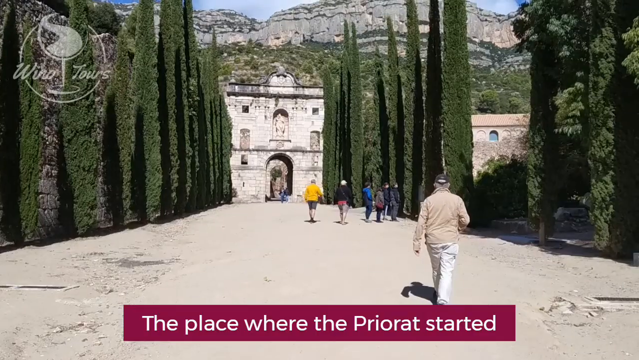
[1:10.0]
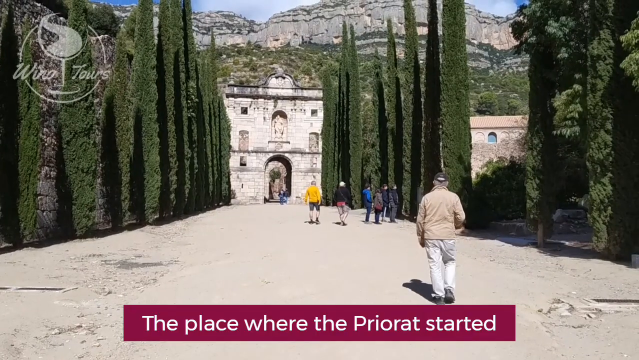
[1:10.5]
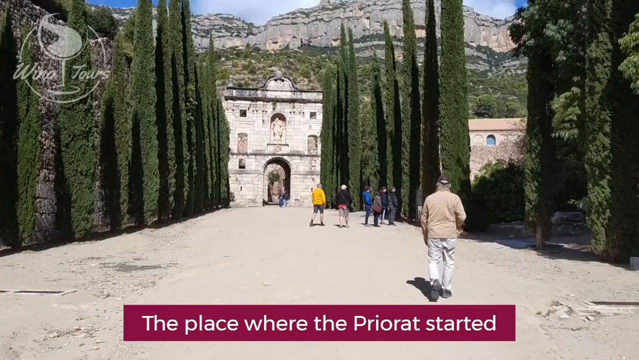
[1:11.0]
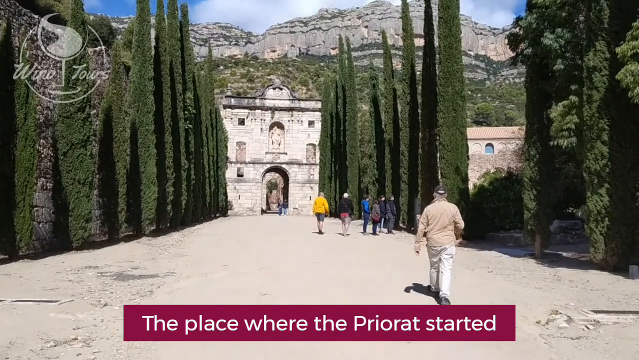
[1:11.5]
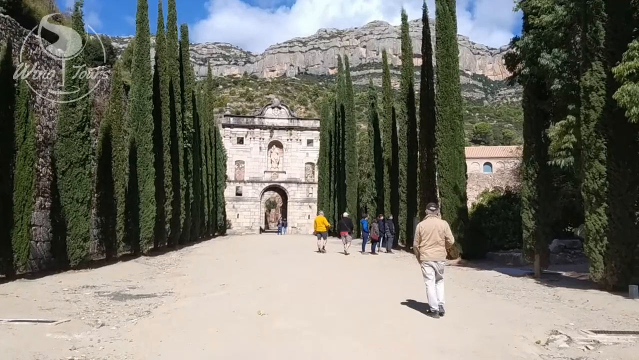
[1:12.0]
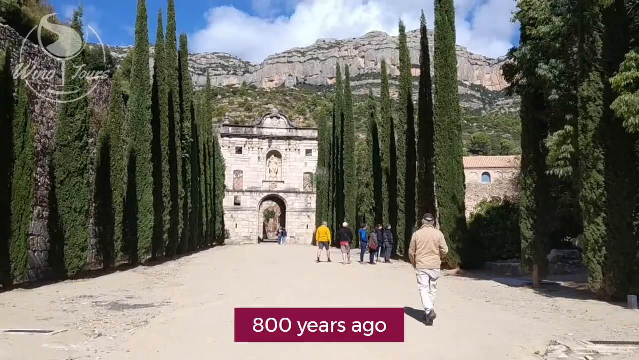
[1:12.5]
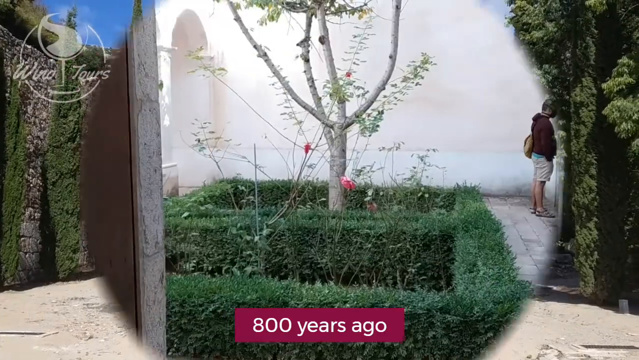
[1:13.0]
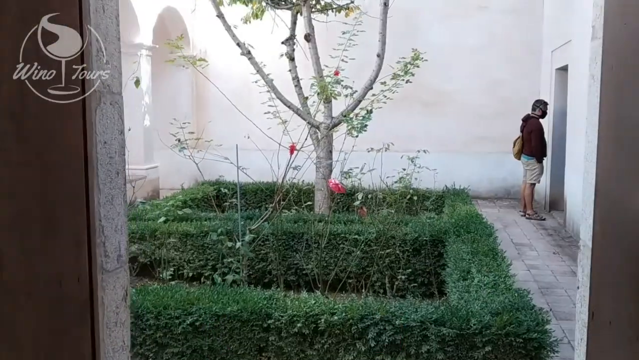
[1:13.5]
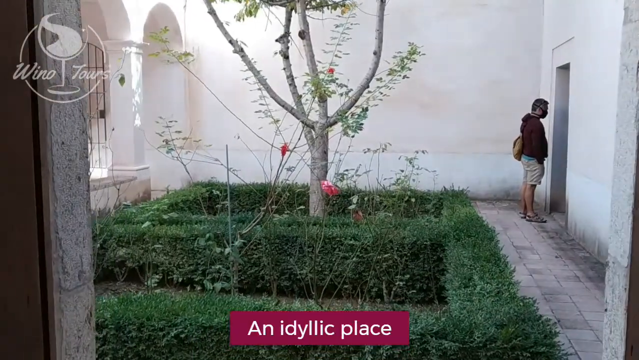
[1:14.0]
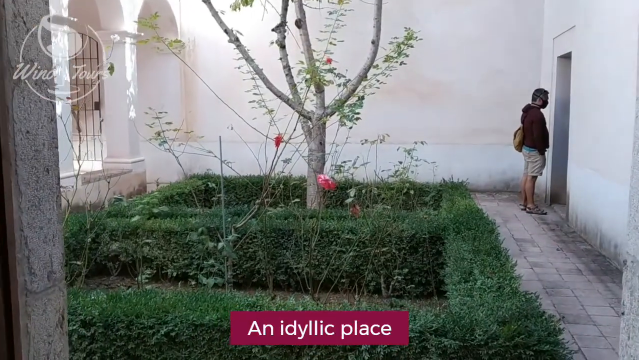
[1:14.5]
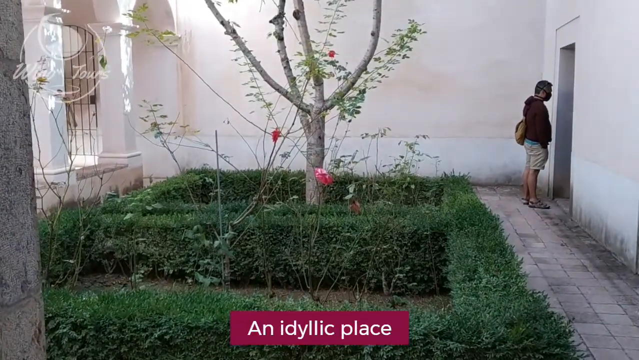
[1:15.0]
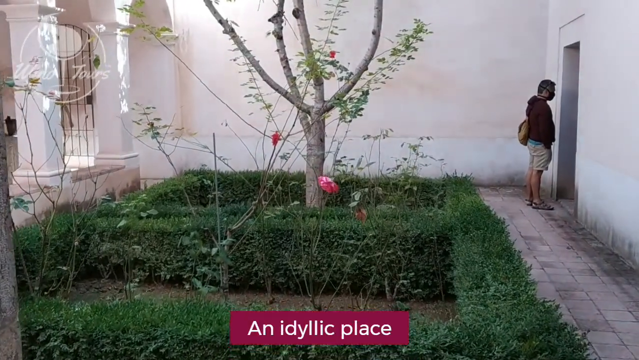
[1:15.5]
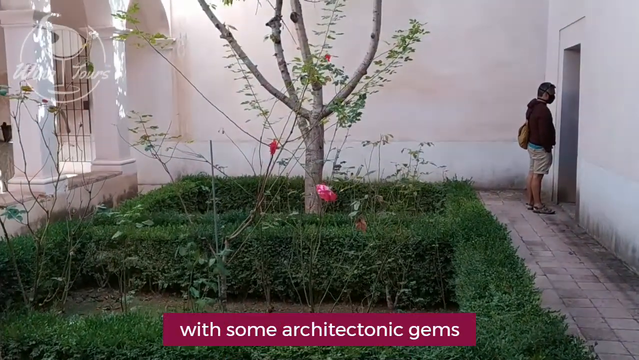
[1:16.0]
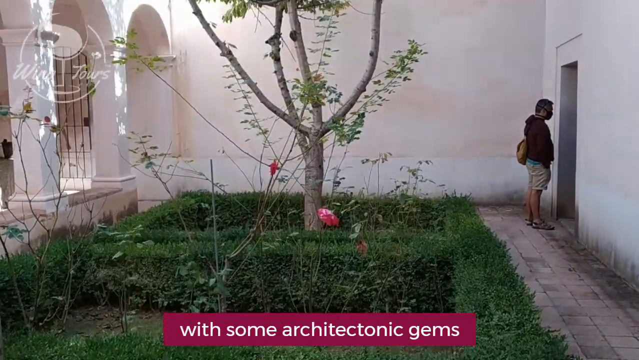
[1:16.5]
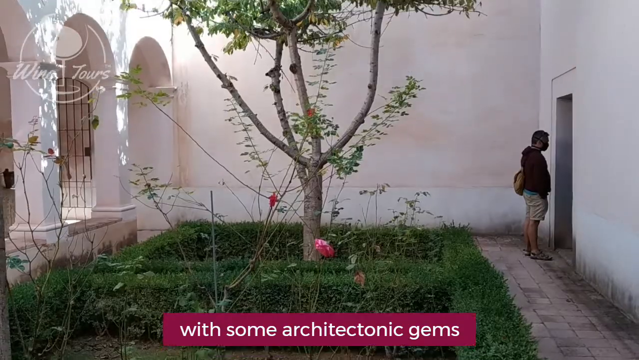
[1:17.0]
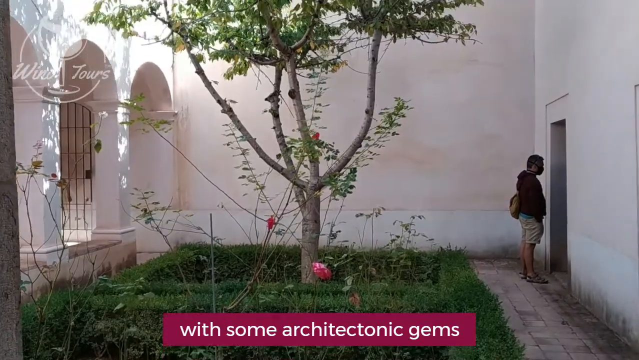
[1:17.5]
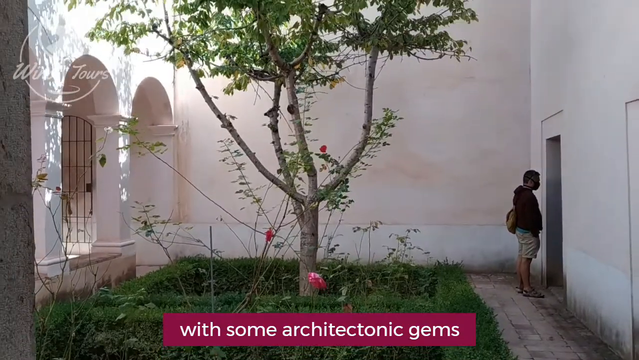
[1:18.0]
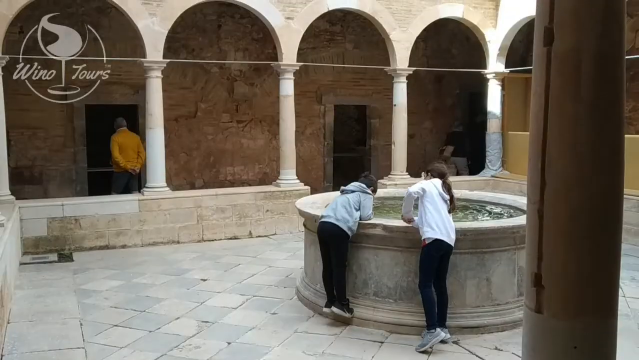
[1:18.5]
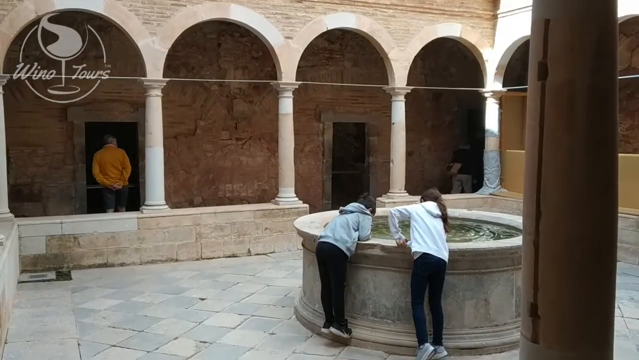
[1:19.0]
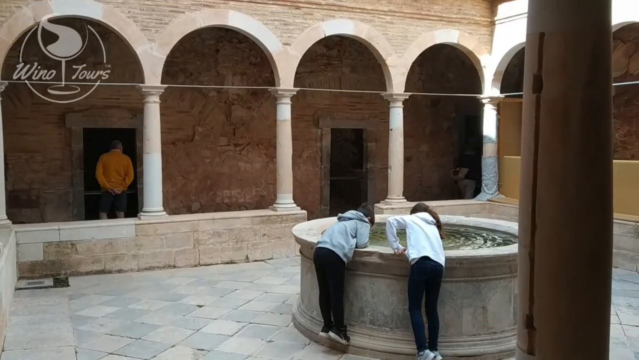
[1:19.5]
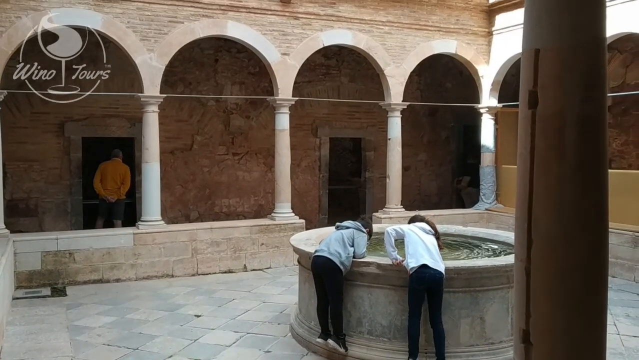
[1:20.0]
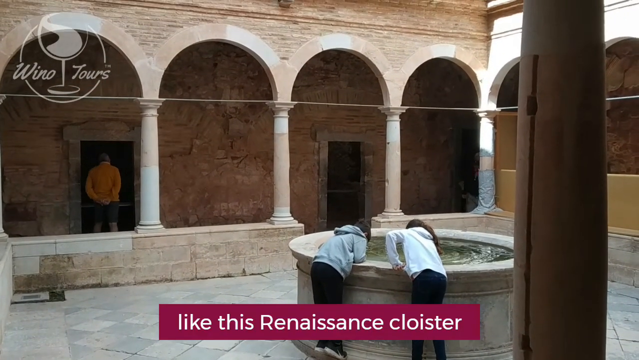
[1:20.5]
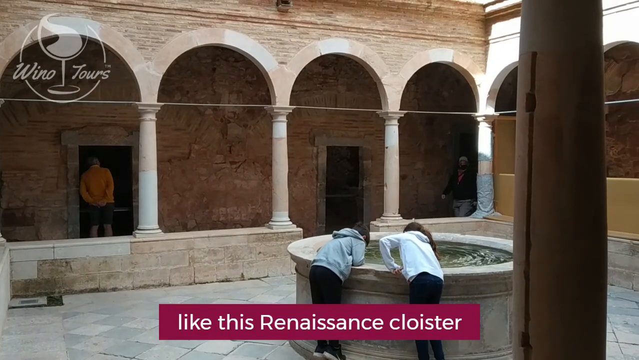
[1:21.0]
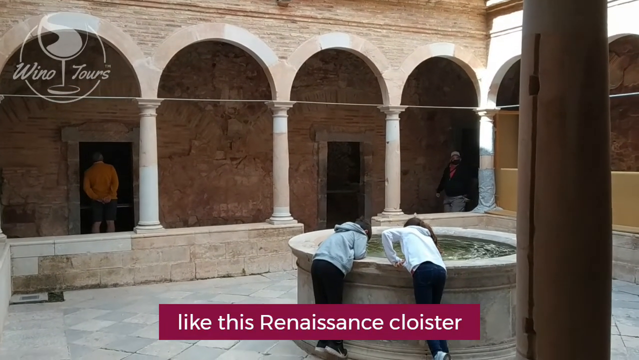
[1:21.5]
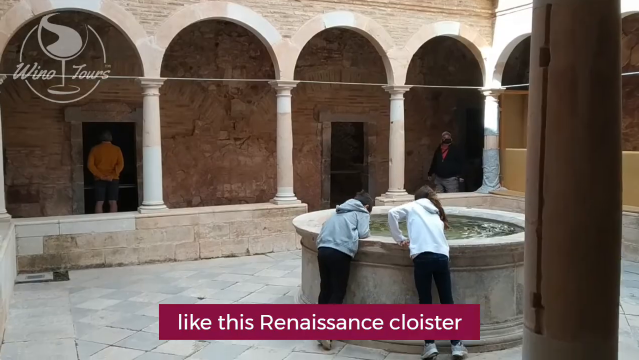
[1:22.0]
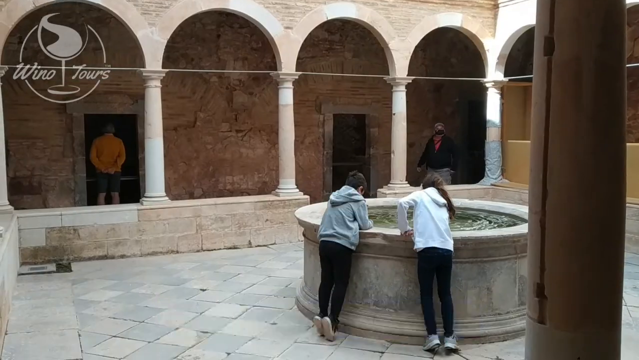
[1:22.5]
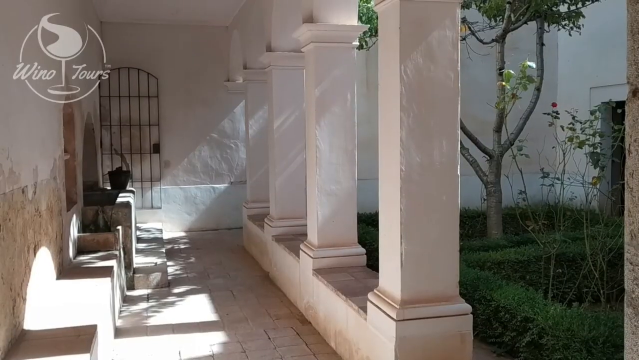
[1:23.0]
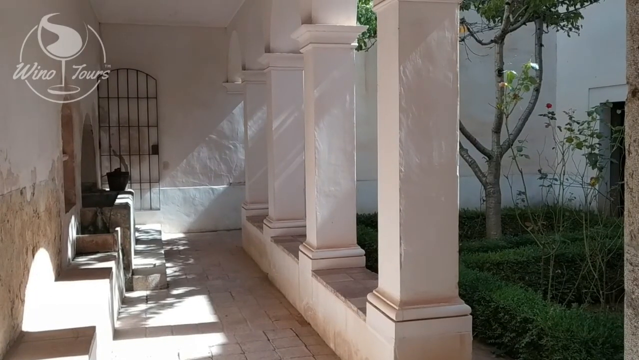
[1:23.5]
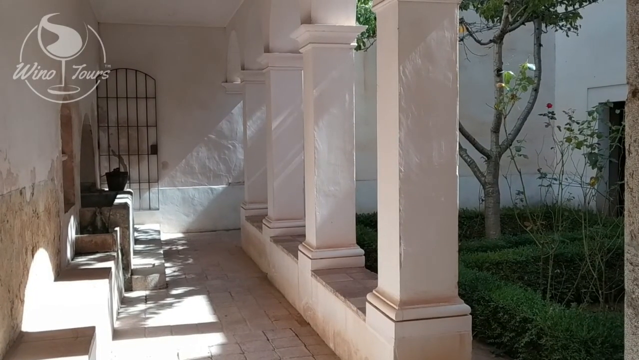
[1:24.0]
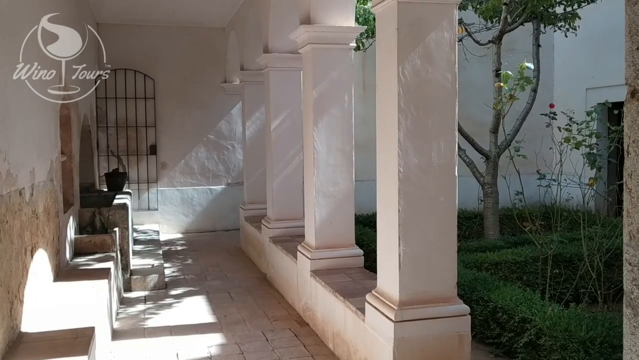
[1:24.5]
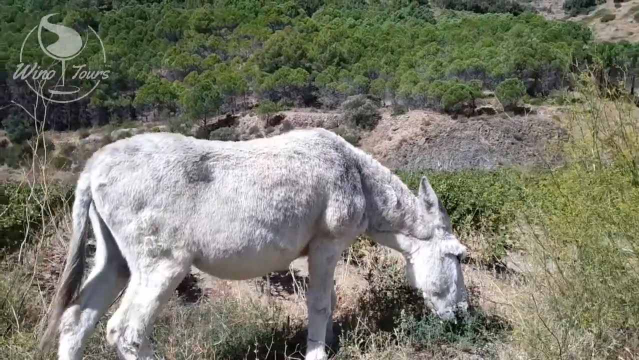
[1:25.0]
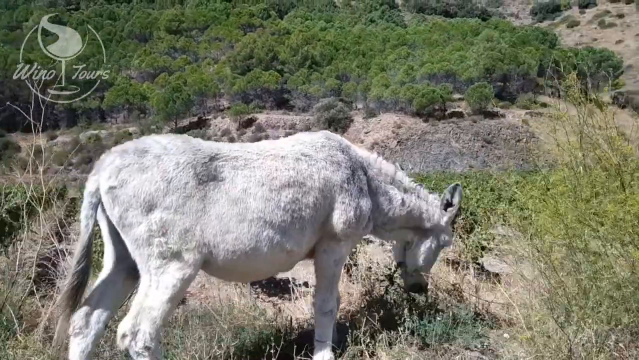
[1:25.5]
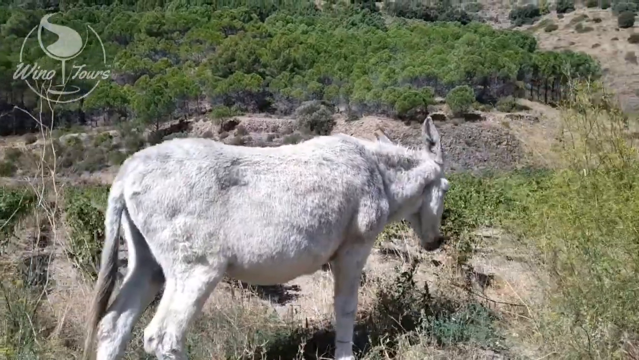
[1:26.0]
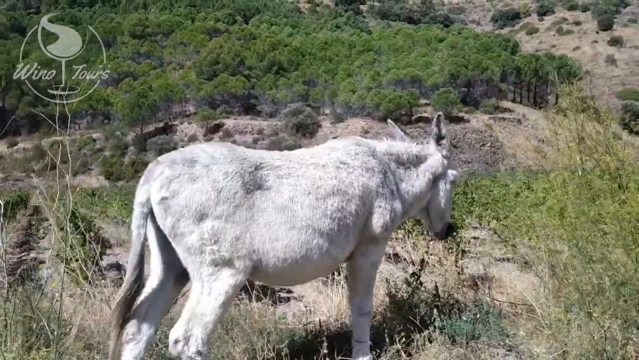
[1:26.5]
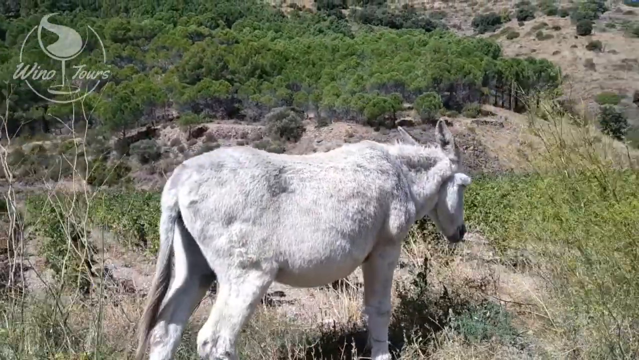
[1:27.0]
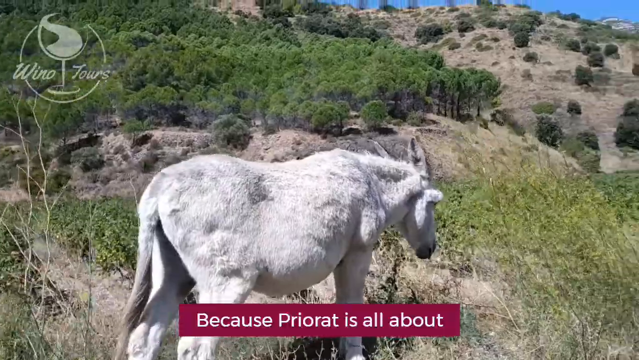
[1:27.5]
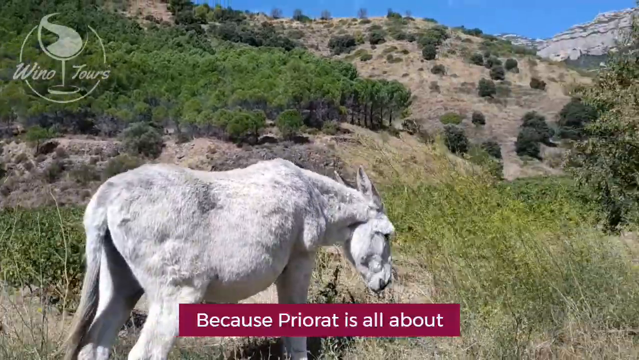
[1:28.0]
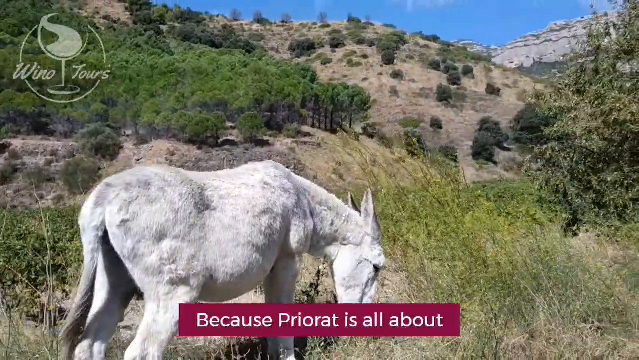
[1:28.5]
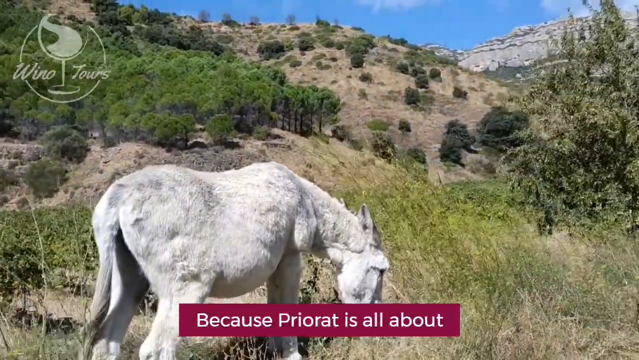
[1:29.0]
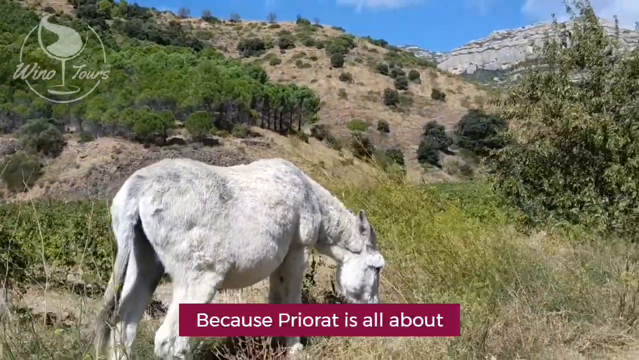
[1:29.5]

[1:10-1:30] The view continues past the arches, moving down the road closer to the stone building. On-screen text refers to the place where "Priorat" started. A person, possibly a man, wears light-colored clothing; a small shadow falls to his left on the ground, suggesting the sun is close to overhead behind him. Ahead of him a group of people walk close together, and on either side of the road are skinny trees or possibly very tall bushes; they all proceed toward the white structure in the distance. The camera pans to an indoor view of a little courtyard, with the text "800 years ago". The courtyard has a small tree and bushes trimmed into rectangles, with maybe flowers growing inside the rectangles, white painted walls, a stone floor, and some kind of metal grate on the left side, unclear whether a window or doorway. The text says "An idyllic place", and the camera pans up to show more of the tree. The view switches to another courtyard whose centerpiece is a fountain or pool of water in a raised stone basin. A couple of young people lean over looking into the pool; past them are pillars with arches and a low wall, and a man in an orange shirt looks through a doorway with his back to the camera. The text says "Like this renaissance cloister", and another person enters. The view switches to possibly another view of the courtyard with the small tree and rectangular sculpted bushes, where the metal grate turns out to be like a door leaning against the wall, probably open, and there are rectangular pillars. The view then returns outside to the donkey, which is still munching on green plants growing near the ground; the camera is very close to it, panning and moving up. The text says "Because Priorat is all about".